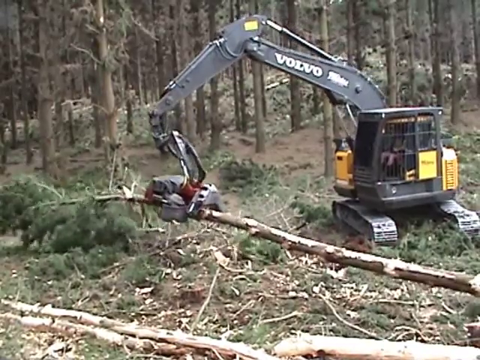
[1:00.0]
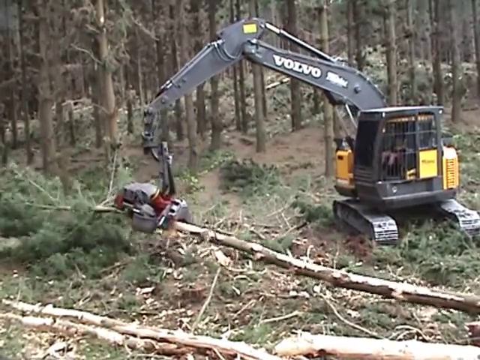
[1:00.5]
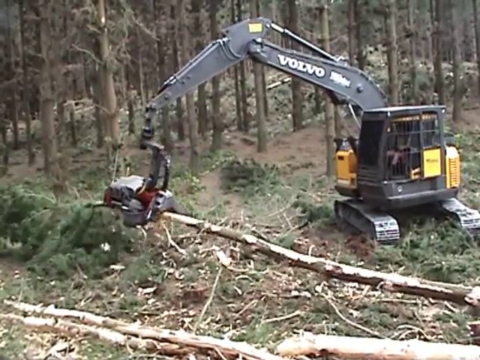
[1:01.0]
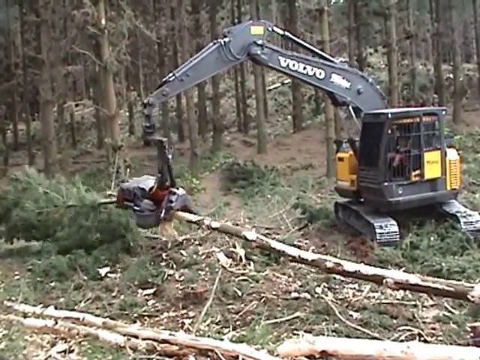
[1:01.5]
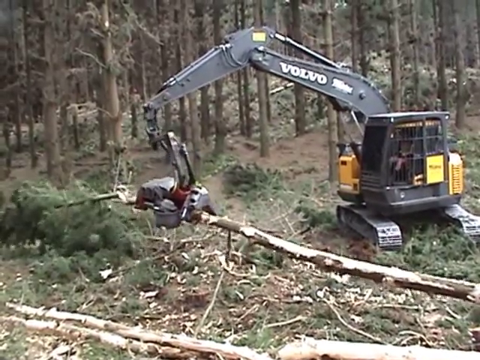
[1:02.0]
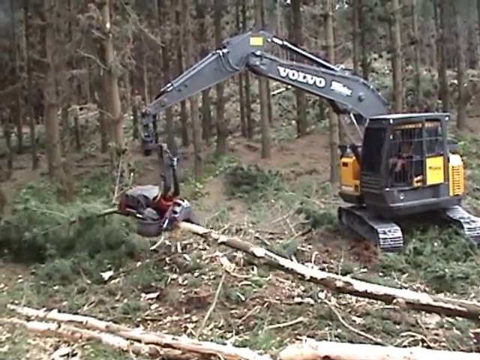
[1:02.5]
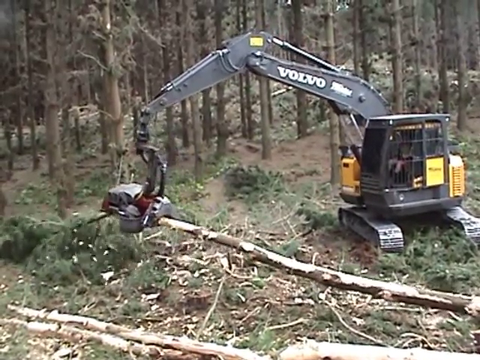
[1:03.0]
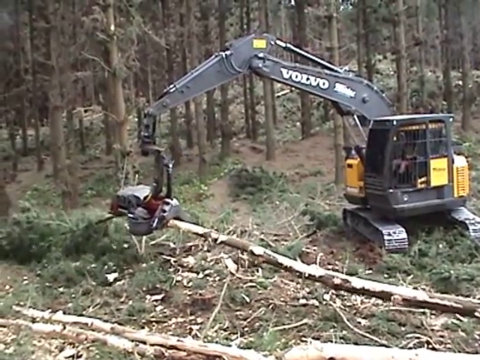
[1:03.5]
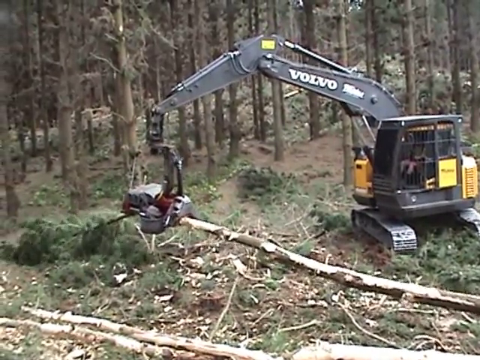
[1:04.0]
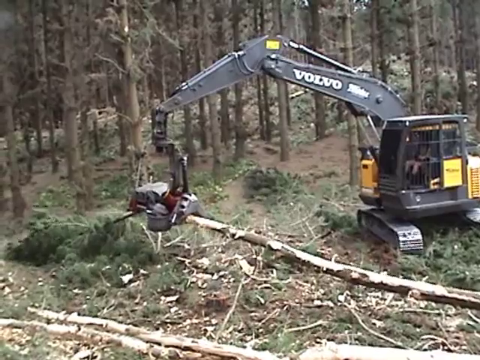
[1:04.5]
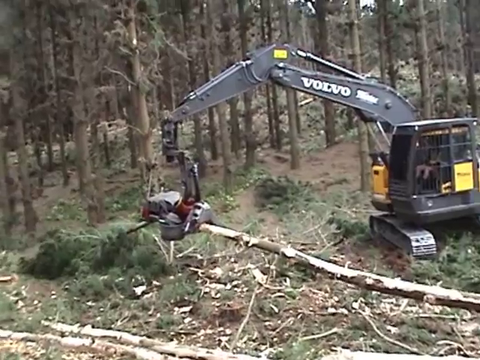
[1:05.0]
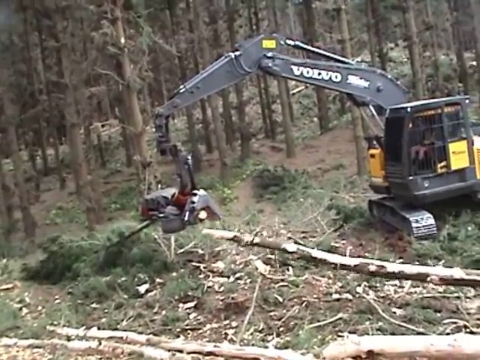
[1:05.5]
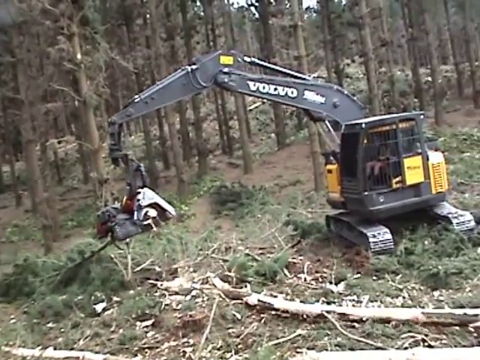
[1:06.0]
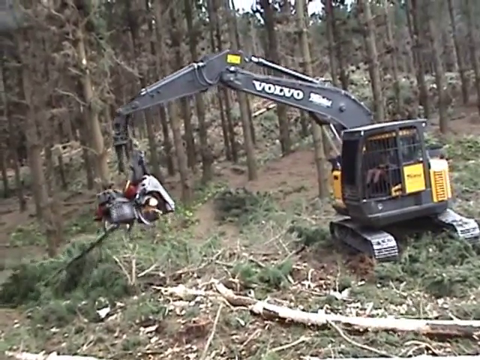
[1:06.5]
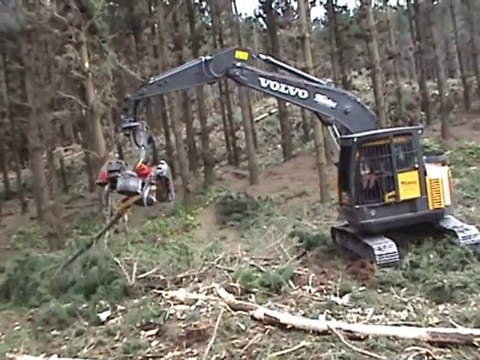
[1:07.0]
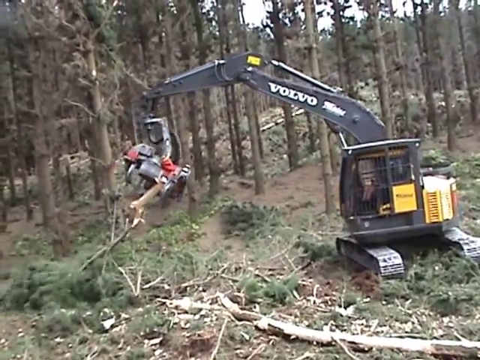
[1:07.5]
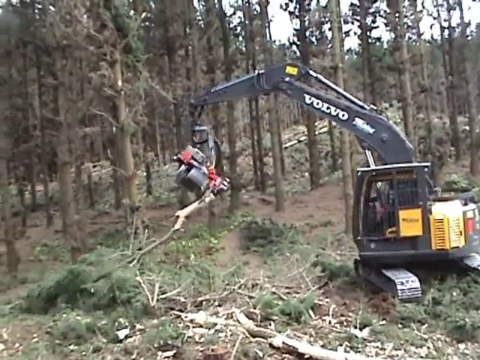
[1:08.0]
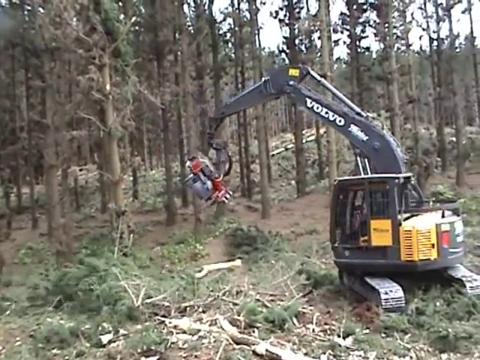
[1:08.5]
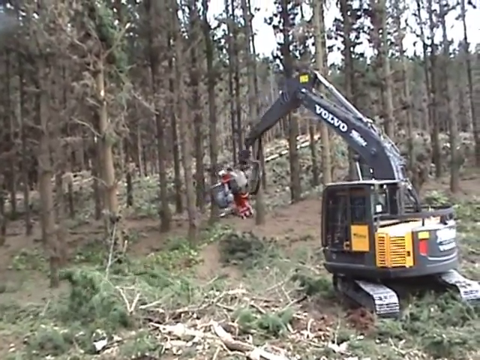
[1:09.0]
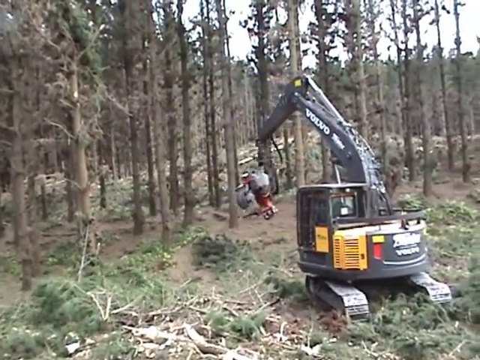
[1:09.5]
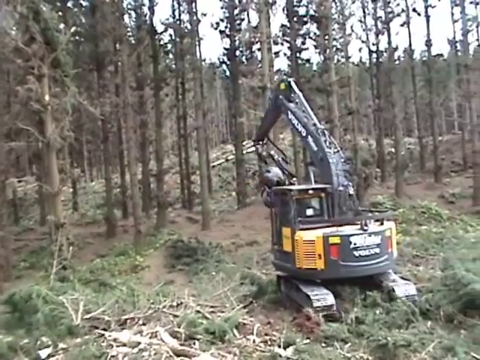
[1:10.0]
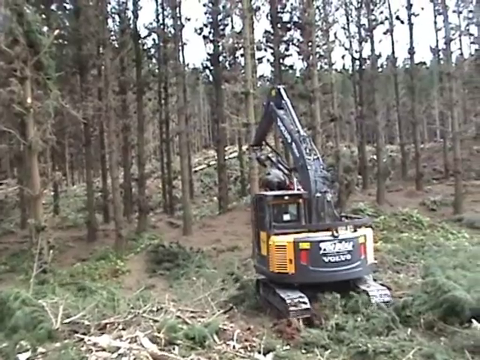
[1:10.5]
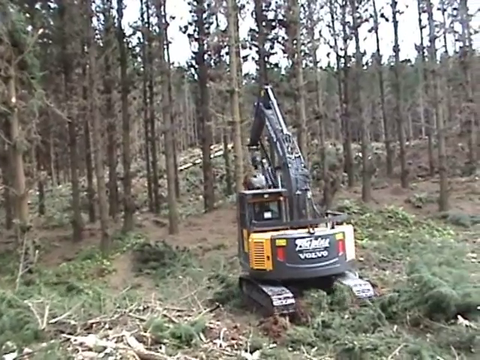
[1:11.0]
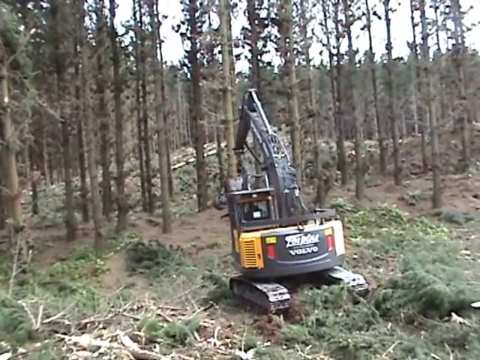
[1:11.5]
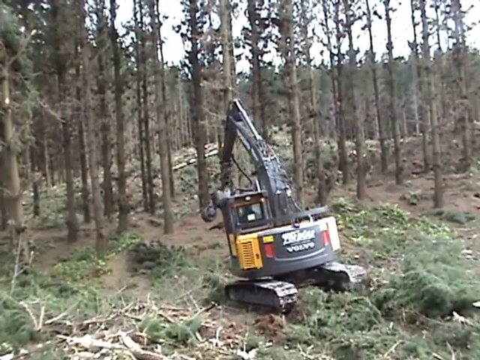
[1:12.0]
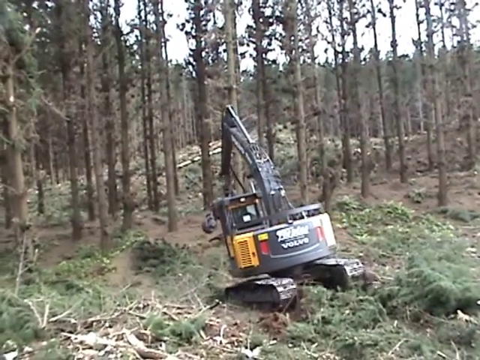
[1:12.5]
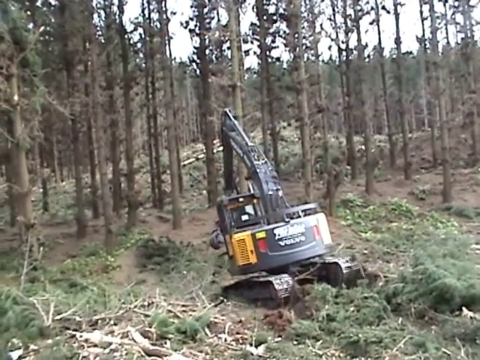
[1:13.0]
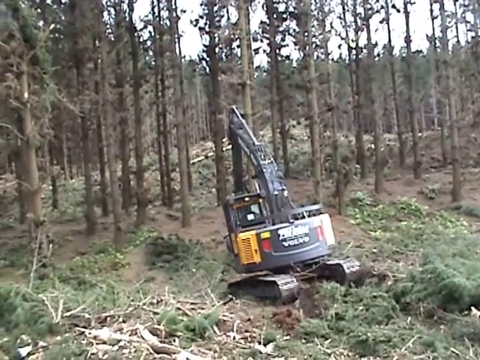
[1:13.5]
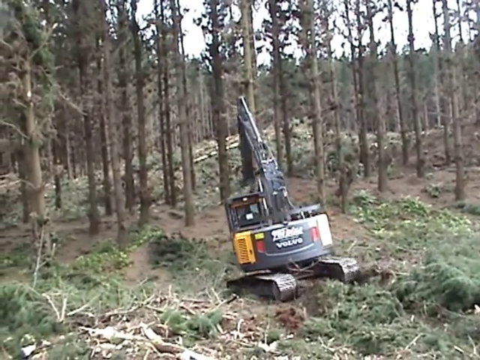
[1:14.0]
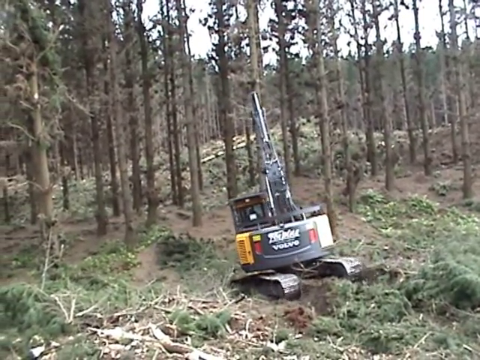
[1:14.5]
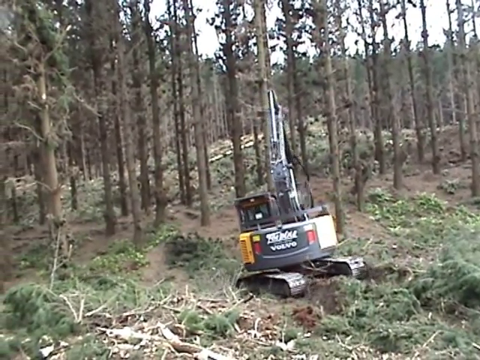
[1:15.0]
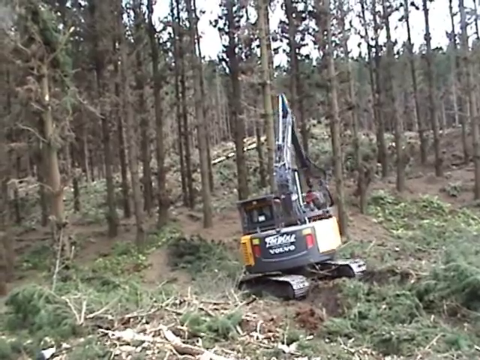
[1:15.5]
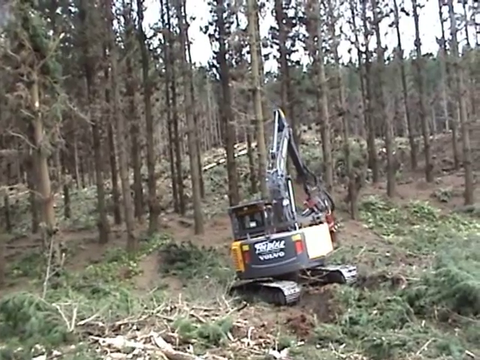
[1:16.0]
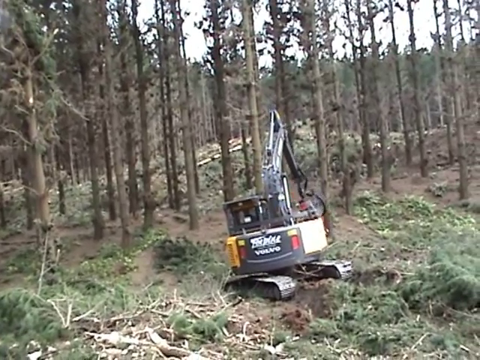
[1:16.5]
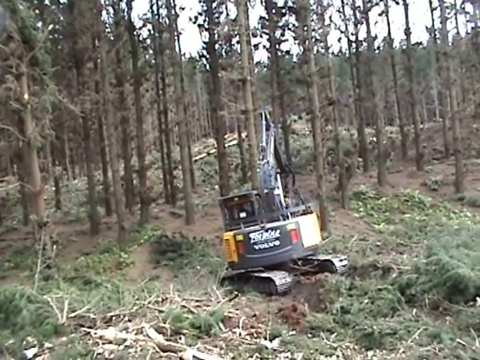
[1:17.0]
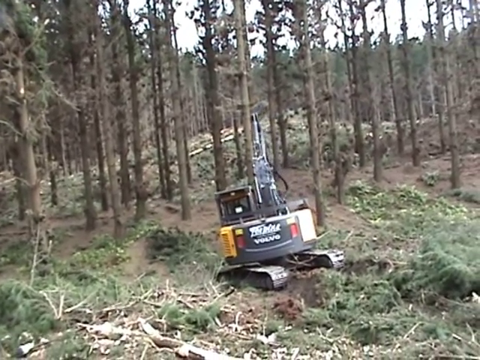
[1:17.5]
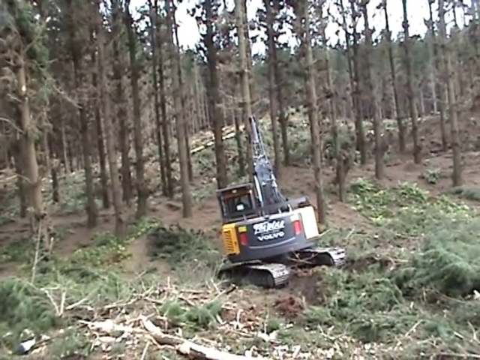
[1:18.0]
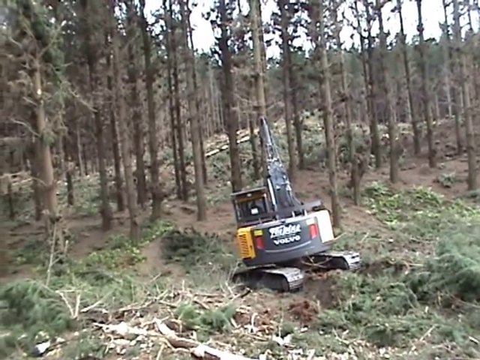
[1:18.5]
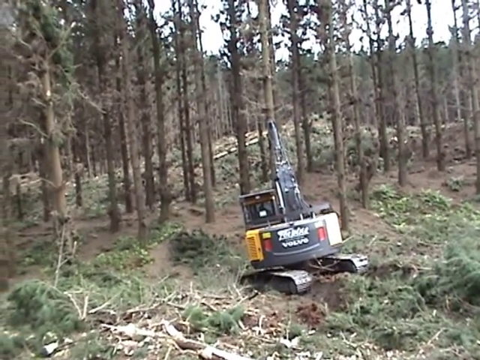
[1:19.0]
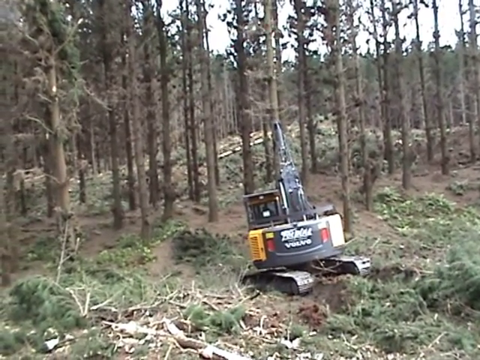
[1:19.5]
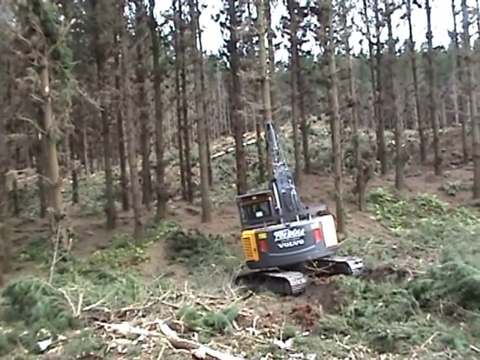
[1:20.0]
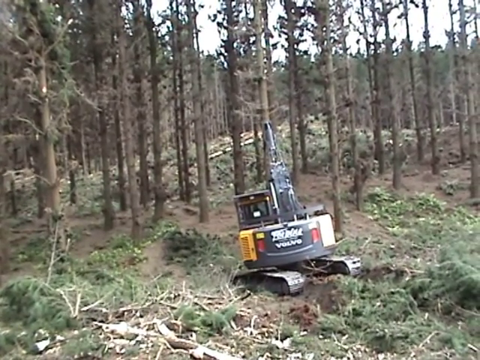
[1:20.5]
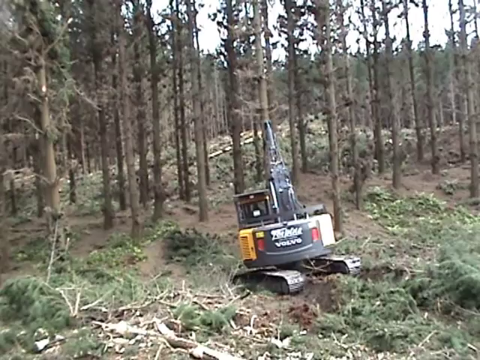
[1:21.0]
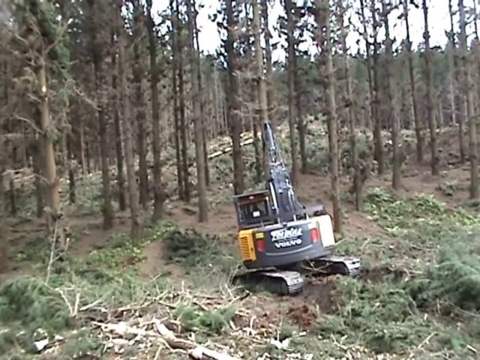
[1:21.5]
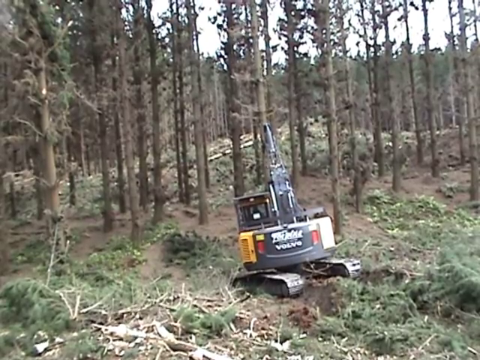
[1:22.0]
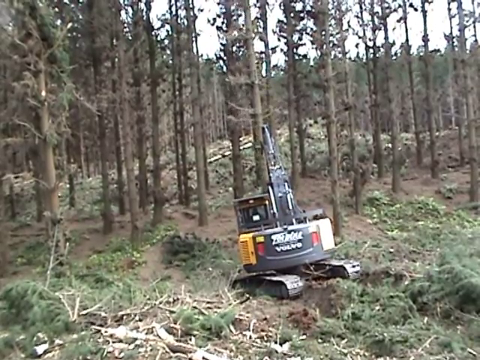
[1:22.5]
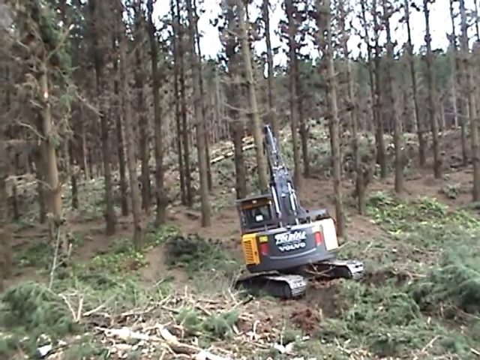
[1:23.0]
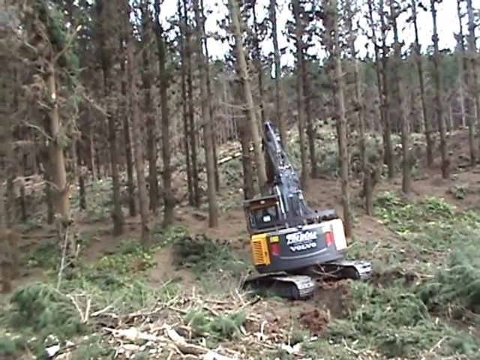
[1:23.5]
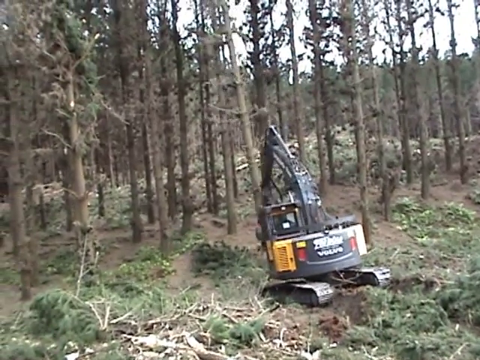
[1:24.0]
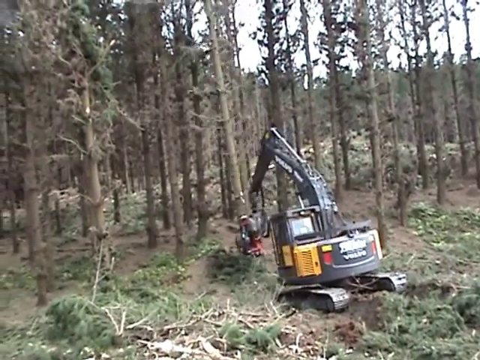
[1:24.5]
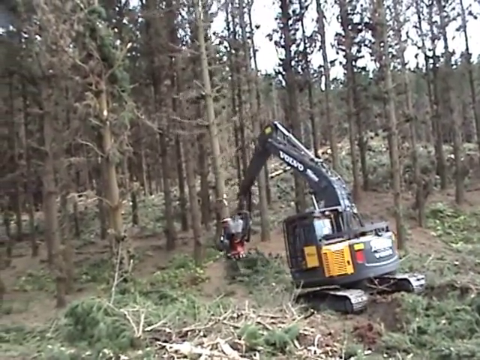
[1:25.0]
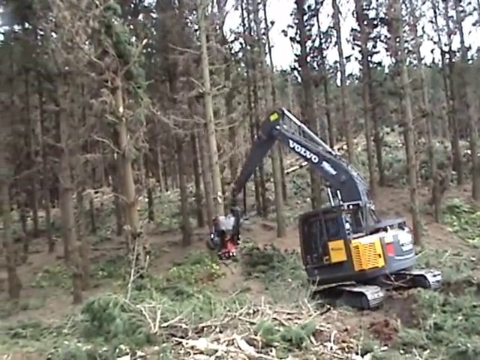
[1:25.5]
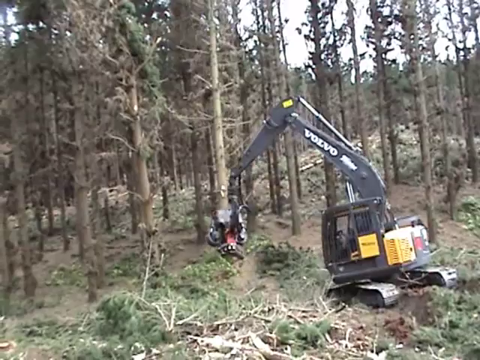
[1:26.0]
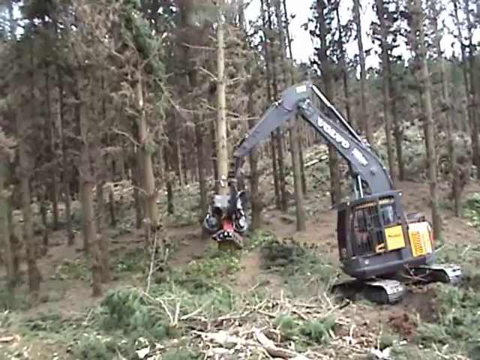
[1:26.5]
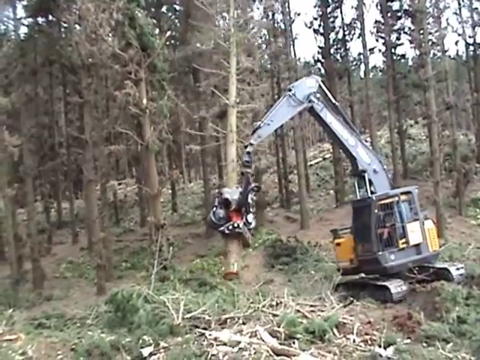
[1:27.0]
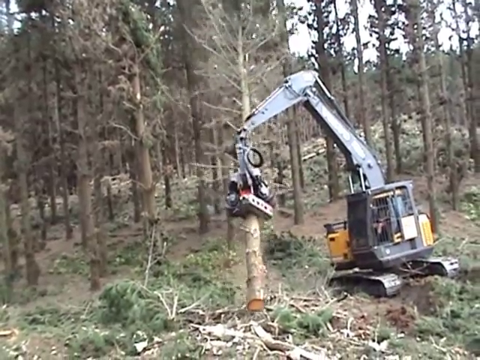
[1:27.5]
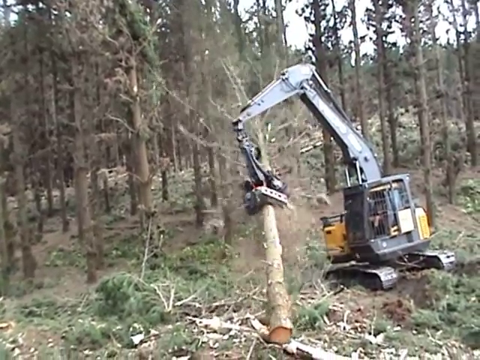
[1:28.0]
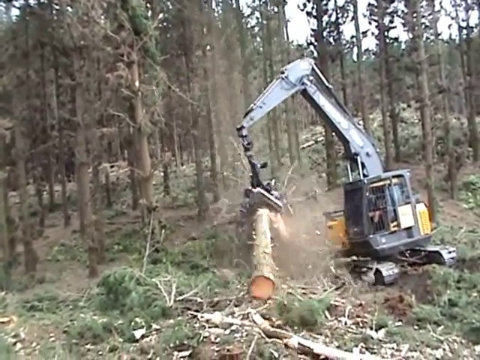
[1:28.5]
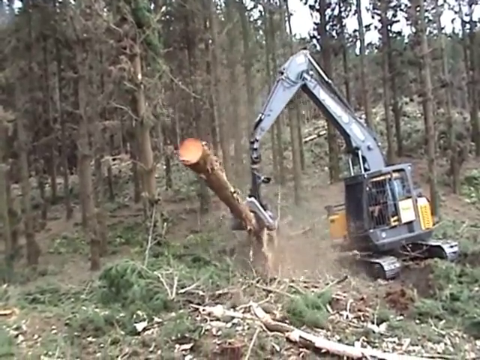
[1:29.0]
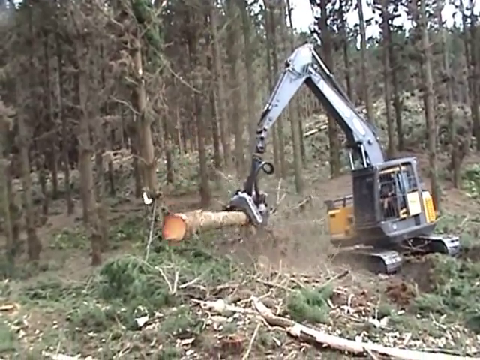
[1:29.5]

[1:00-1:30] The attachment snaps off the narrow top of the tree, letting the leafy top fall to the ground and leaving just the cleaned-off trunk, which is left on the forest floor. It then grabs another tree and repeats the process, slicing through its base and starting to slide up the middle to shave off the branches and twigs that stick out. The studded metal implements are apparently what strip the branches and twigs from the trunk as it slides up and down. It lifts the tree around from behind it and then lets gravity slide the tree through the attachment's grip. The movement looks strange, as if the physics are wrong in some way.